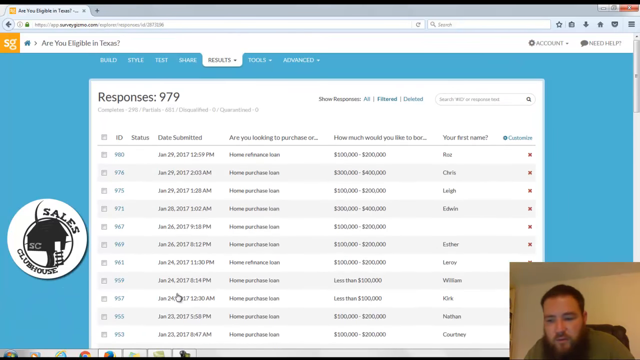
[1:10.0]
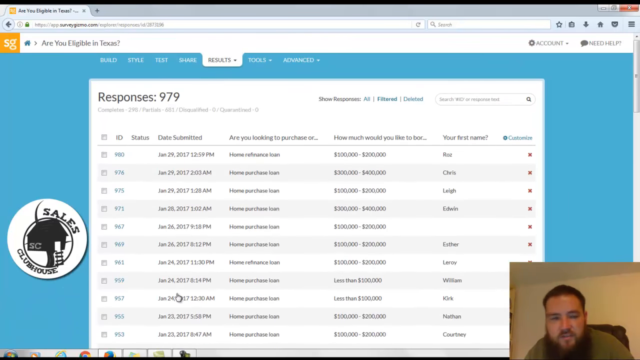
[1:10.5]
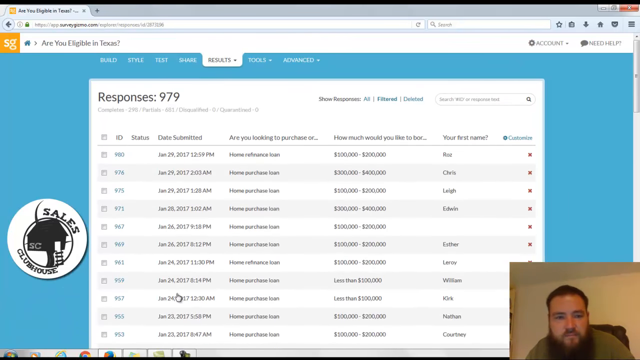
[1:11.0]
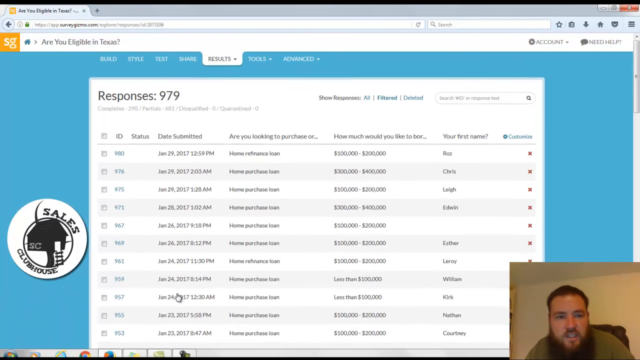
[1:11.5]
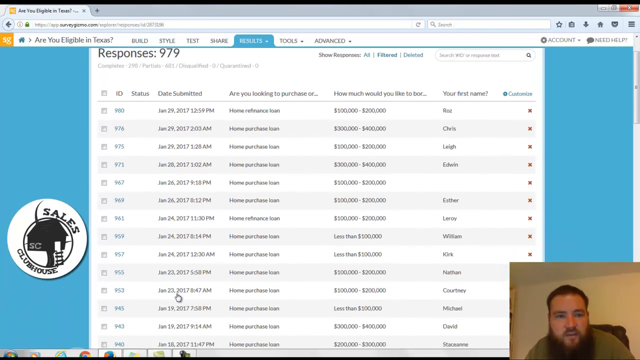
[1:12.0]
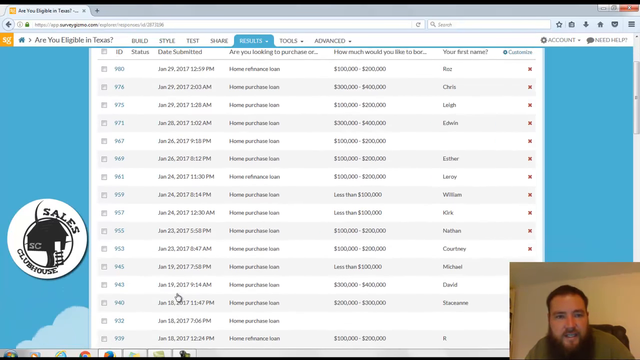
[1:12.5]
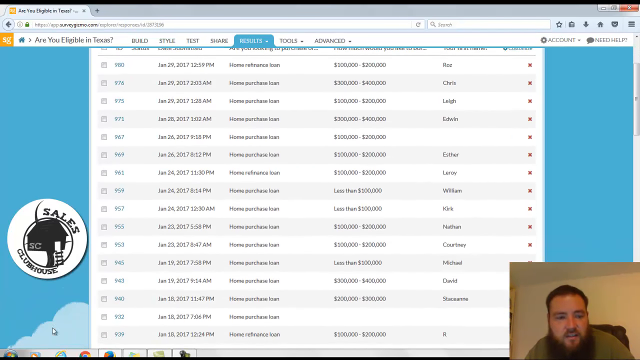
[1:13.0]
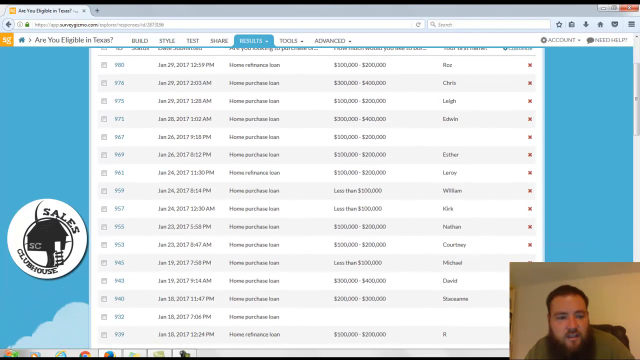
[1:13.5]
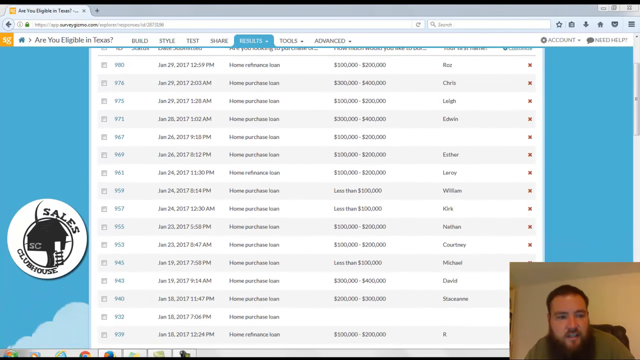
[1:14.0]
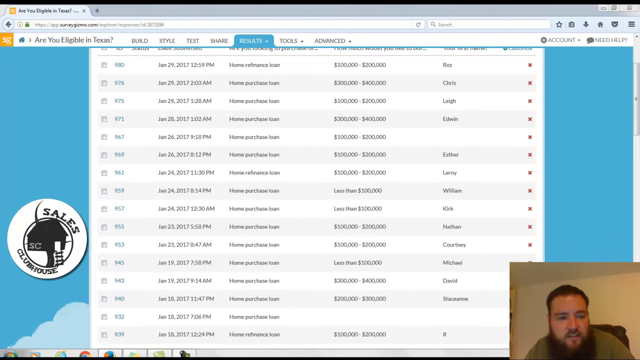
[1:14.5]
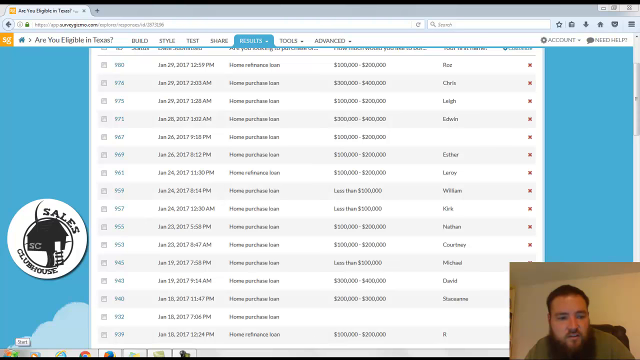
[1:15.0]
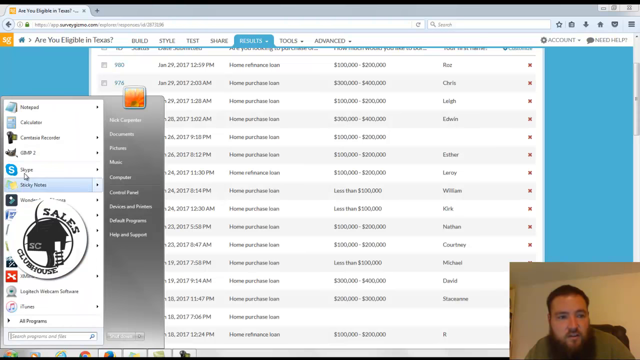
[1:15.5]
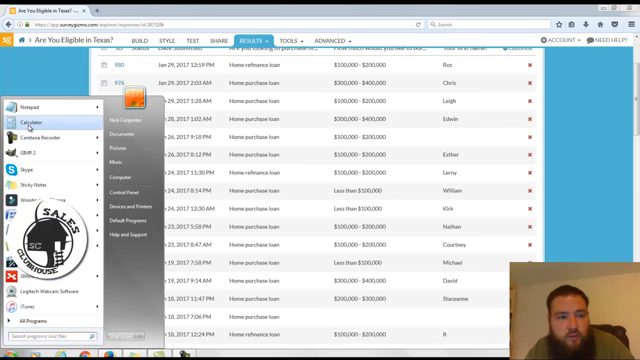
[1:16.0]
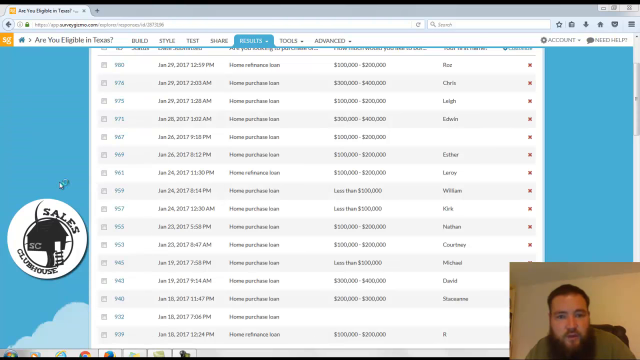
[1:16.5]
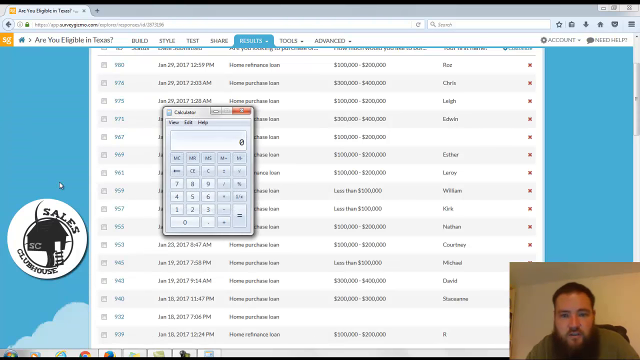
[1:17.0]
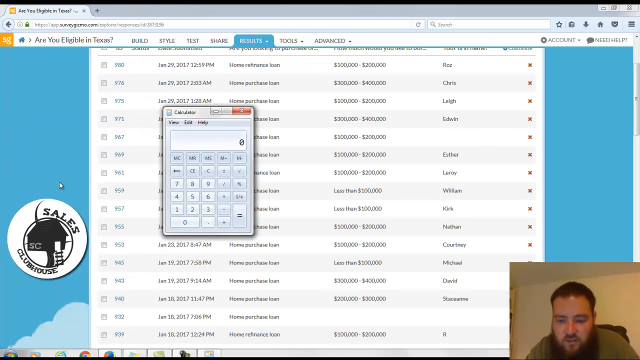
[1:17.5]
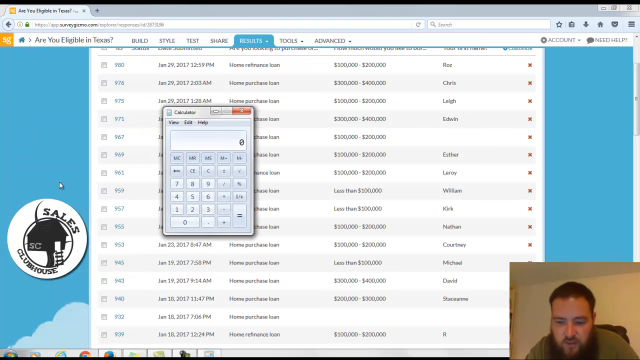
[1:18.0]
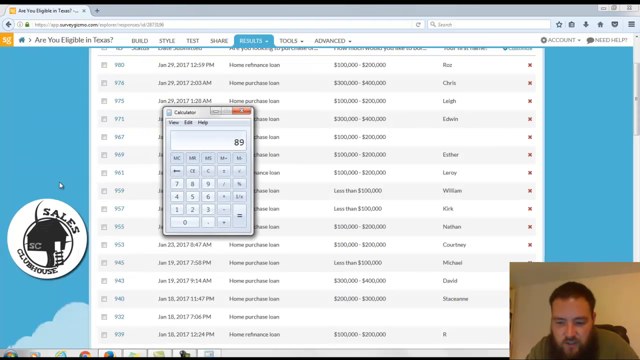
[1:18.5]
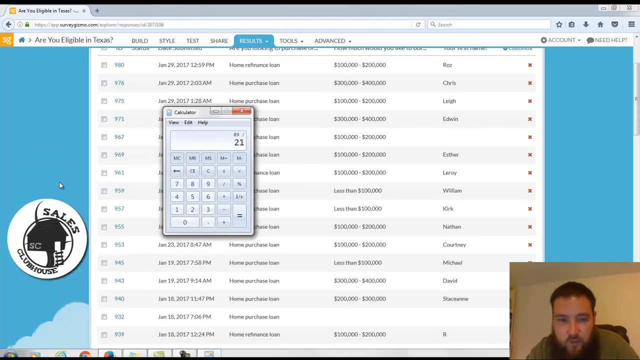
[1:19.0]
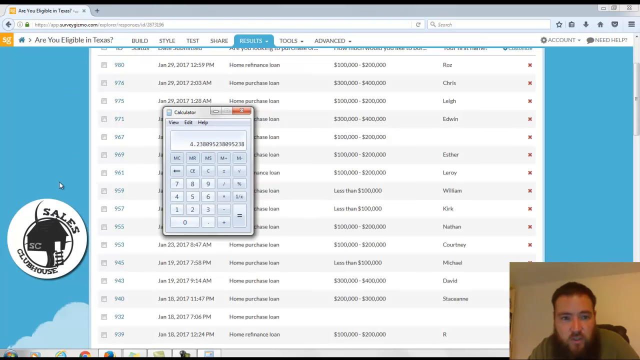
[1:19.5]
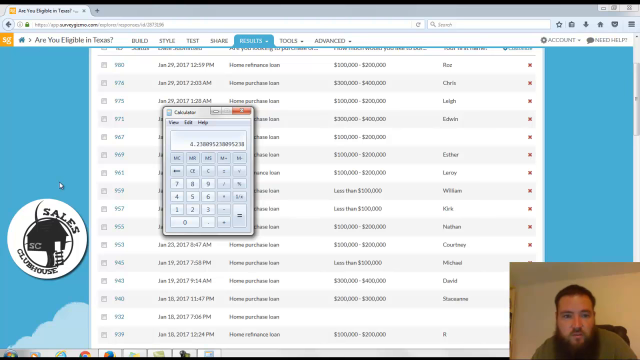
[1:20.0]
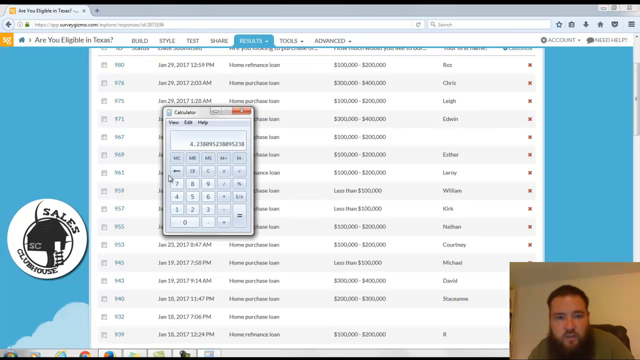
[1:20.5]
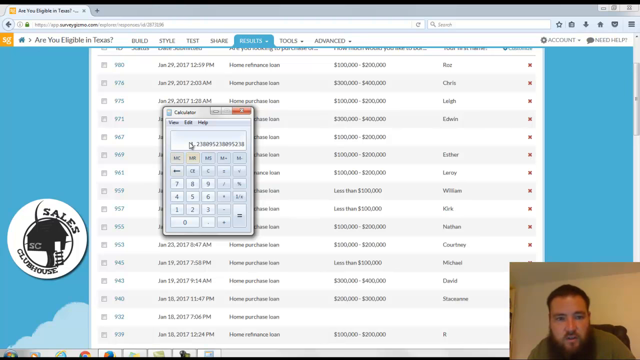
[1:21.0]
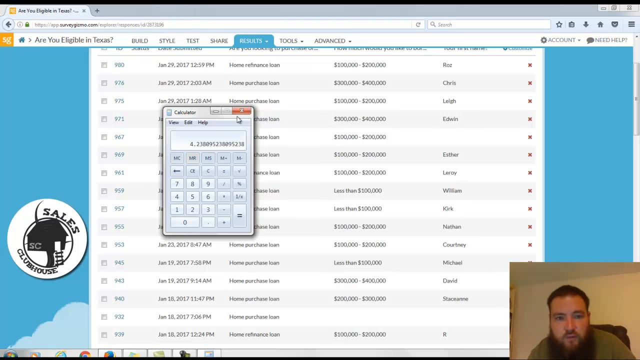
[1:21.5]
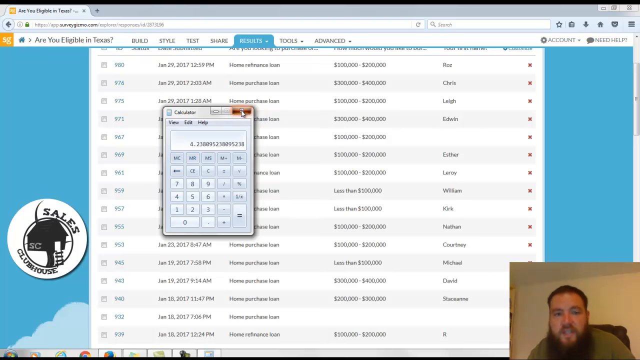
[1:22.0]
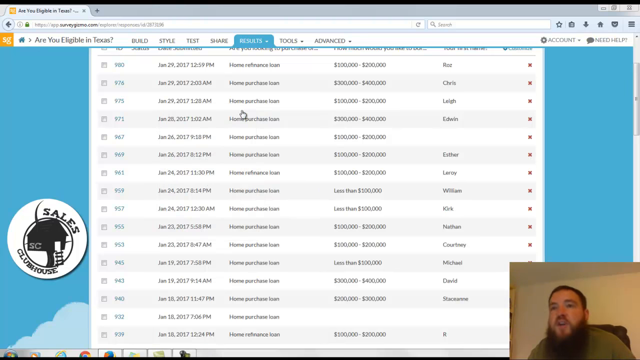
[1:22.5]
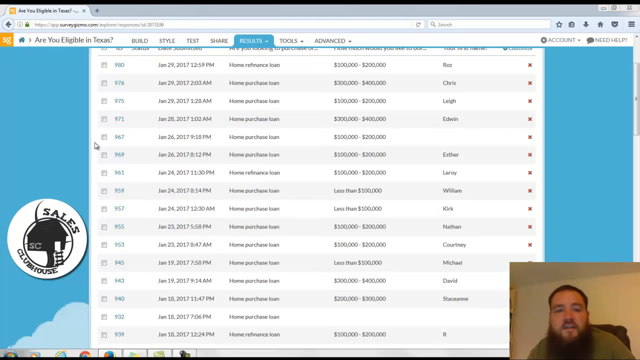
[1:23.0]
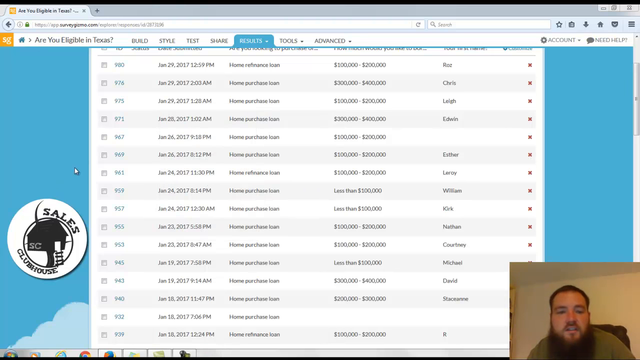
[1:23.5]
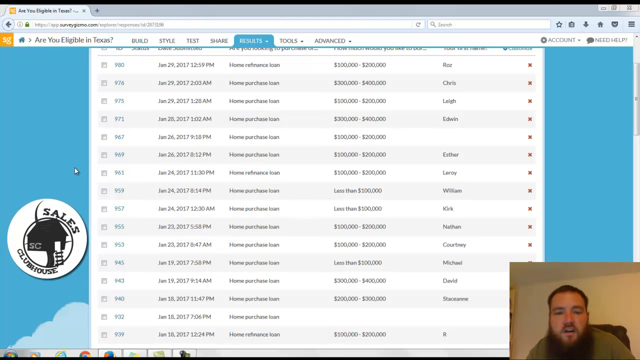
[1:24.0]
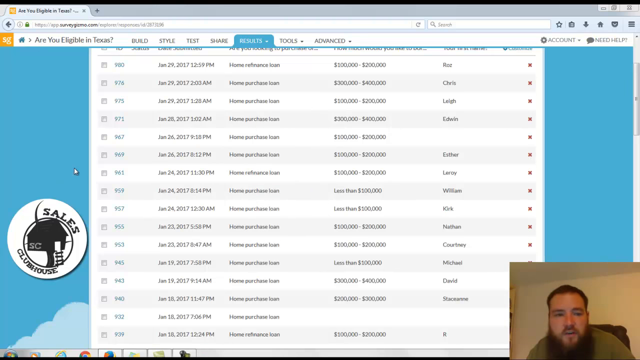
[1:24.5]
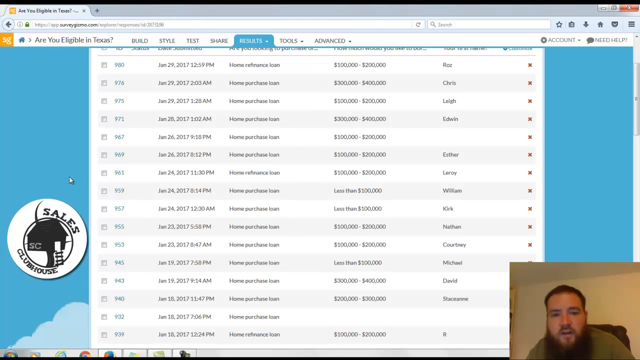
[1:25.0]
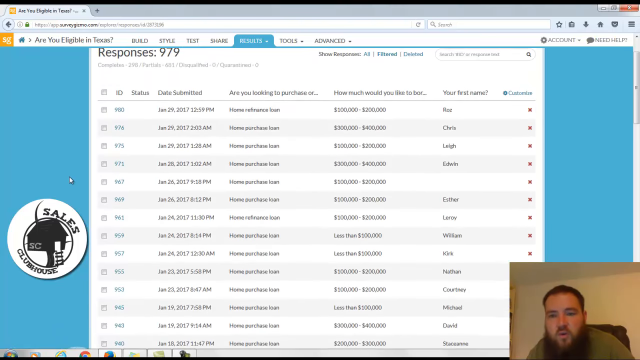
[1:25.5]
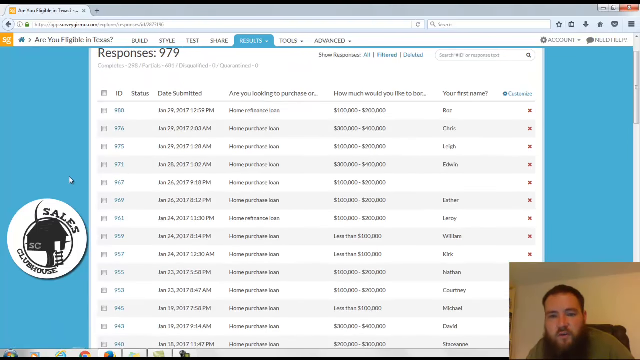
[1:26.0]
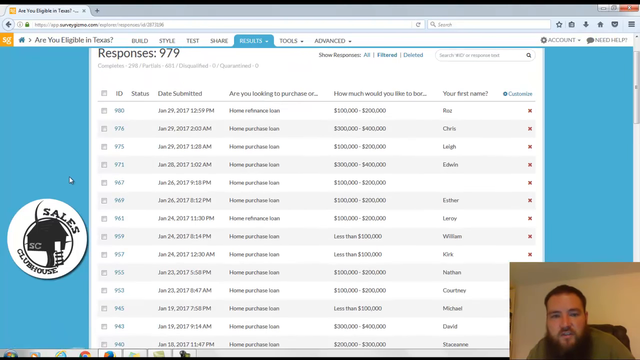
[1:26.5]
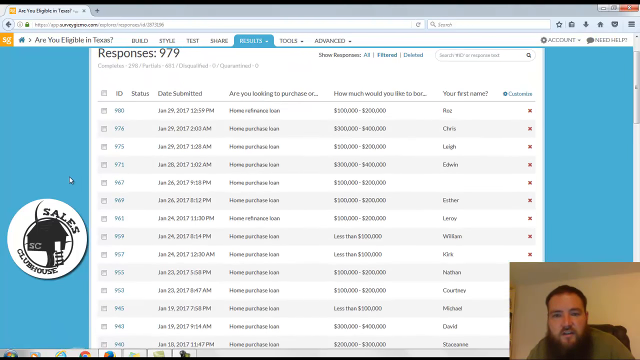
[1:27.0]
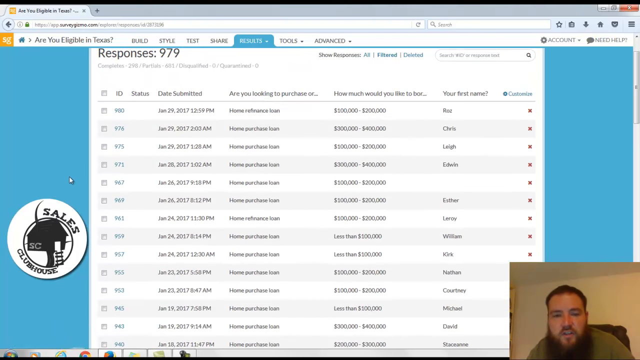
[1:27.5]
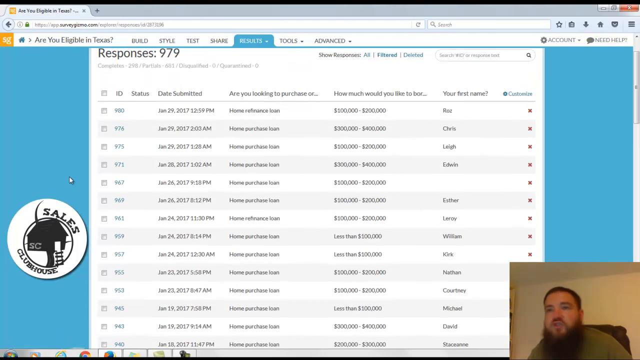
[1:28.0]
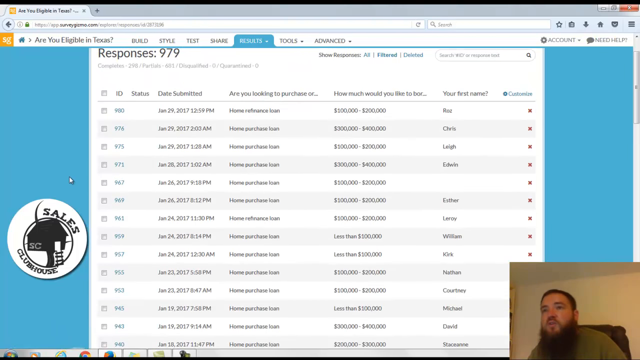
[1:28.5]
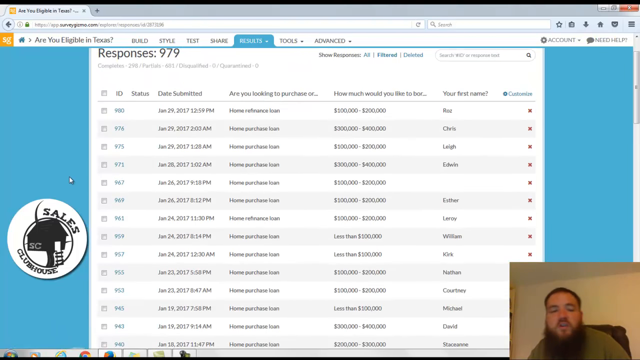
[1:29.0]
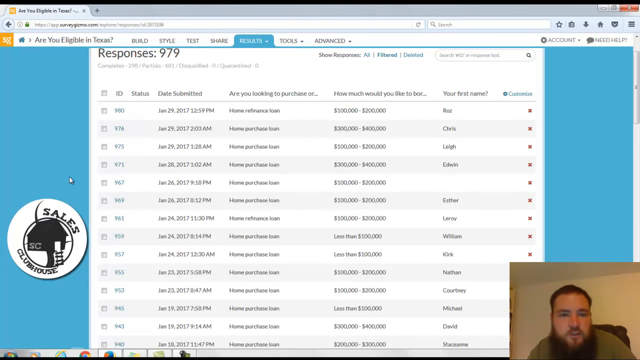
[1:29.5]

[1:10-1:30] A white Caucasian man, apparently in his 20s or 30s, is in a small square at the bottom right of the frame in a streamer-like layout. He has a very large, thick beard, wears a pale green shirt and sits on a black computer chair, looking toward the bottom right of the box at his monitor. Above him is a website that appears to be about homeowners or loans in Texas. At the top is "SG" on an orange square, with the text "Are you eligible in Texas?" to its right. Below is what looks like a white table with five notable columns reading "ID", "date submitted", "are you looking to purchase or...", "how much would you like to borrow..." and "your first name". His mouse cursor moves around the site while he talks toward the camera. He scrolls down through the date submitted column, then opens a start menu and clicks on the calculator application. A calculator pop-up appears, and he types 89 divided by 21, which equals 4.23 followed by many decimal places. He closes the calculator, talks some more, scrolls back up to the top of the website and keeps talking, seemingly doing a calculation related to home loans.